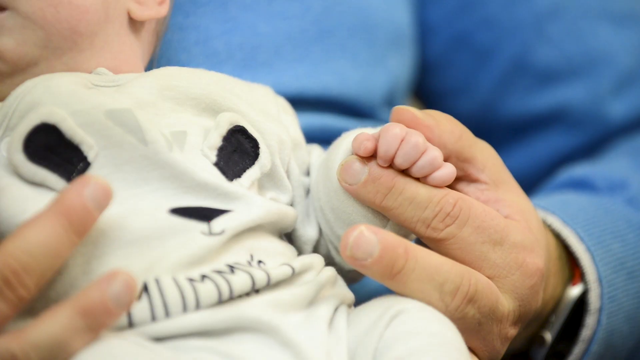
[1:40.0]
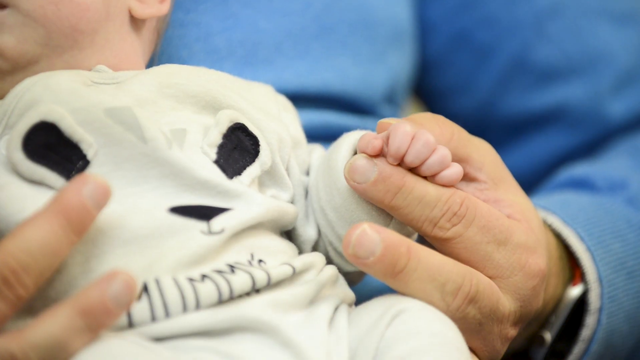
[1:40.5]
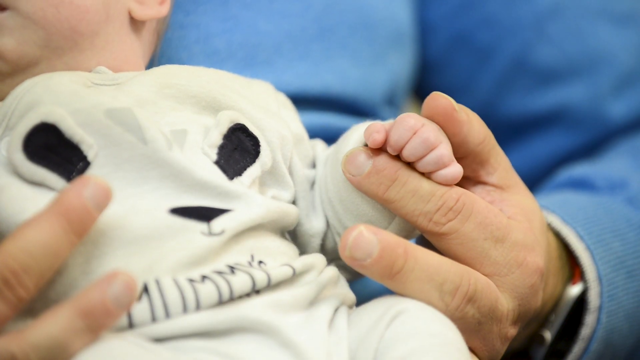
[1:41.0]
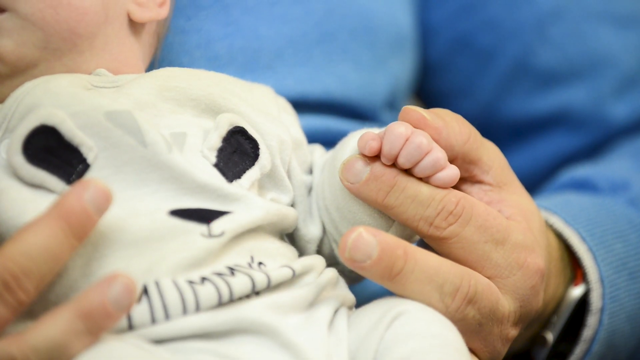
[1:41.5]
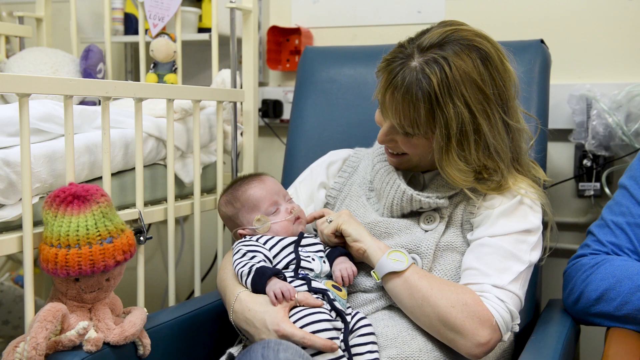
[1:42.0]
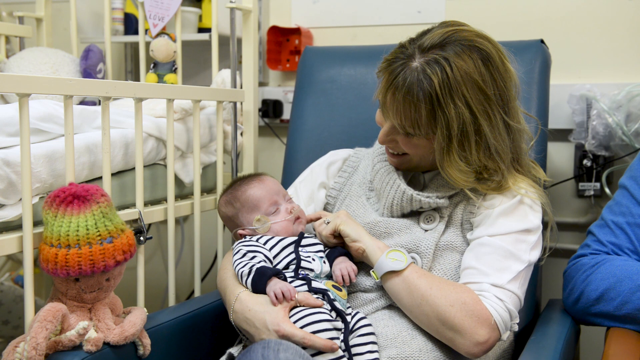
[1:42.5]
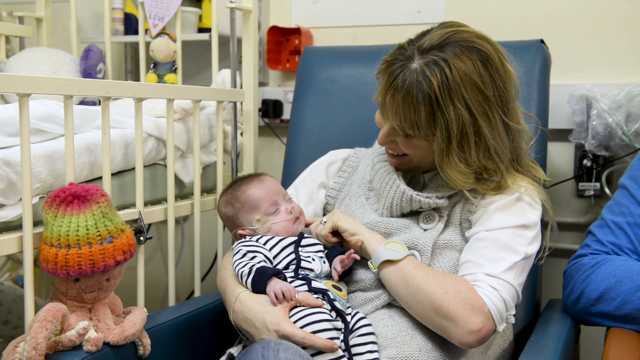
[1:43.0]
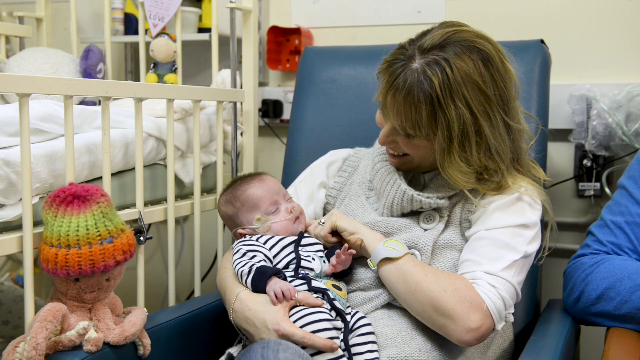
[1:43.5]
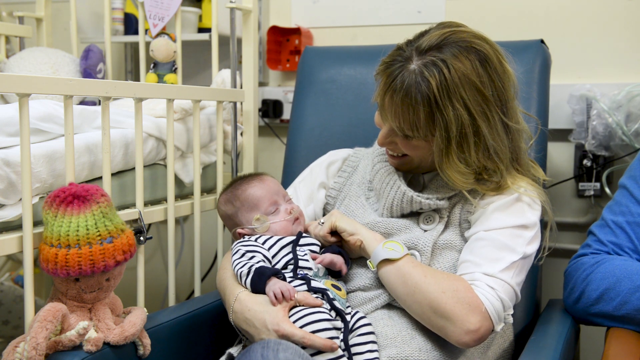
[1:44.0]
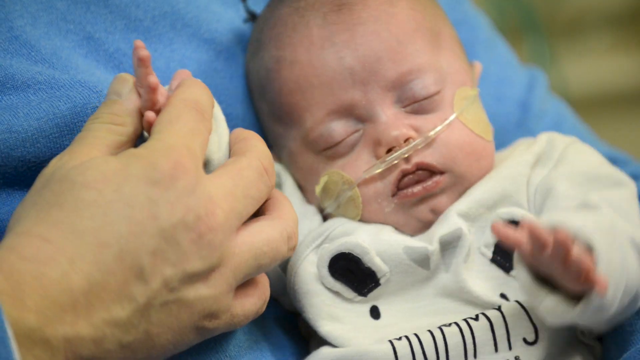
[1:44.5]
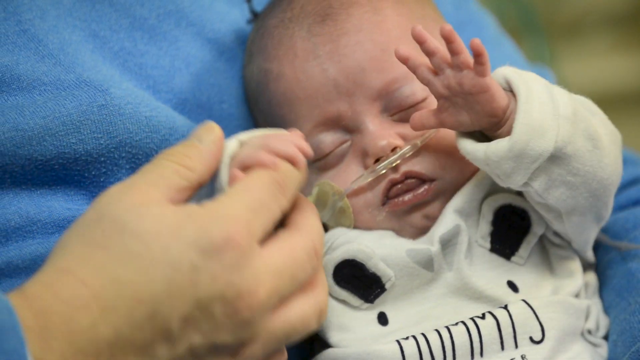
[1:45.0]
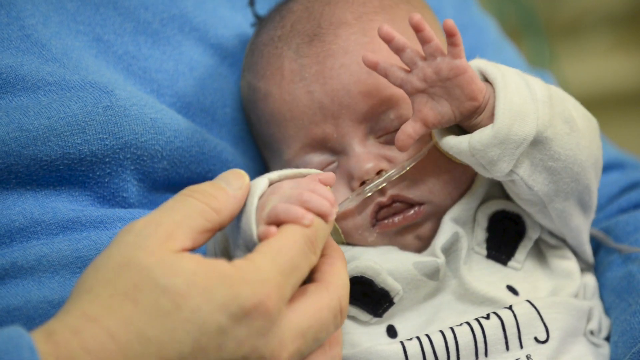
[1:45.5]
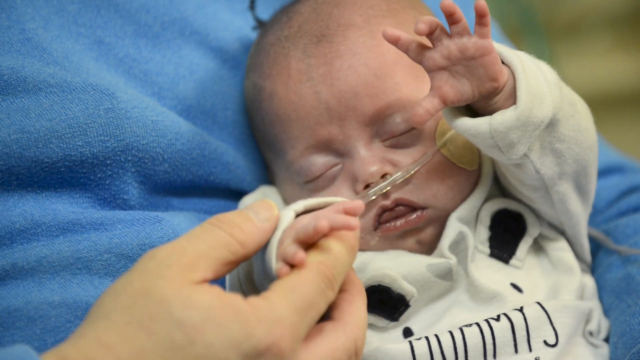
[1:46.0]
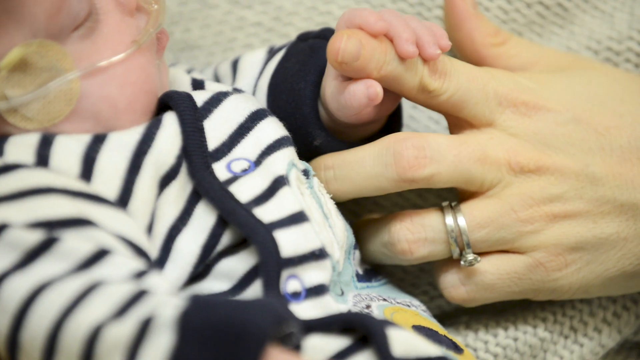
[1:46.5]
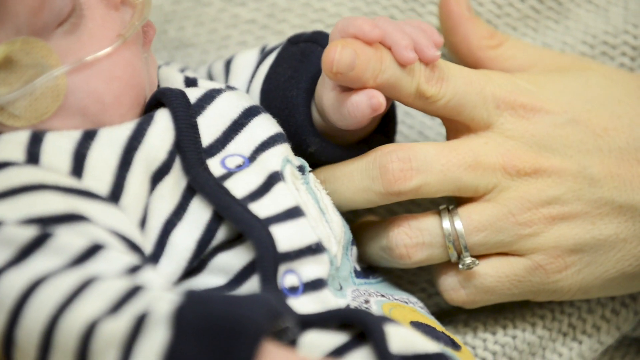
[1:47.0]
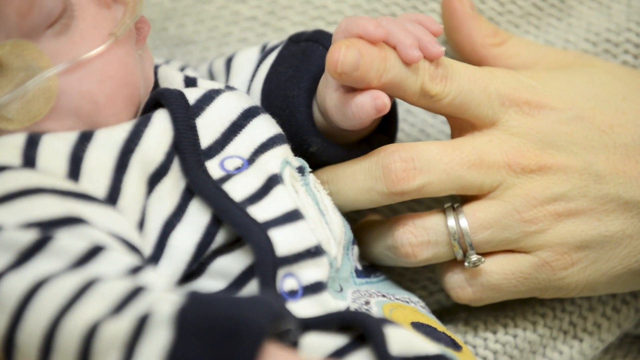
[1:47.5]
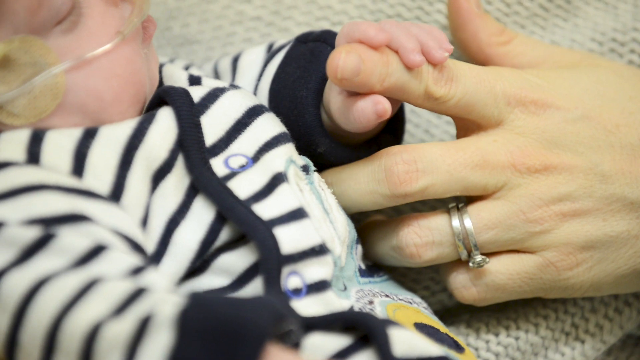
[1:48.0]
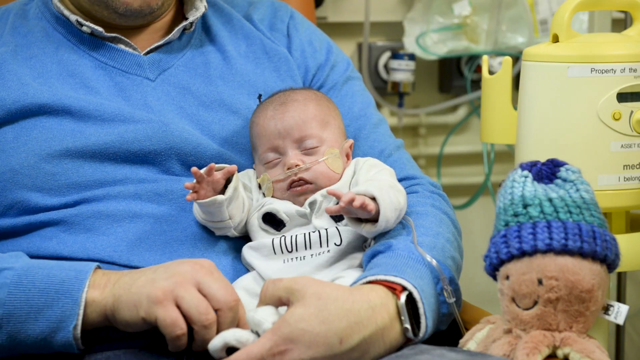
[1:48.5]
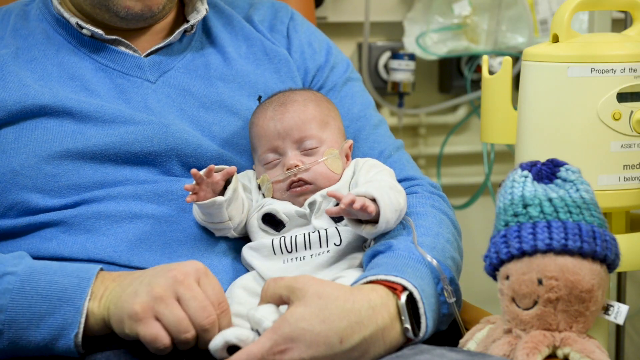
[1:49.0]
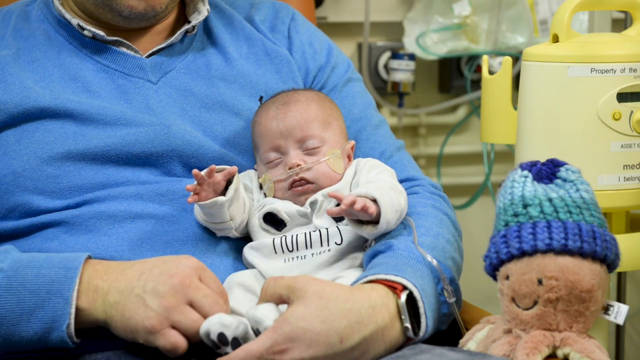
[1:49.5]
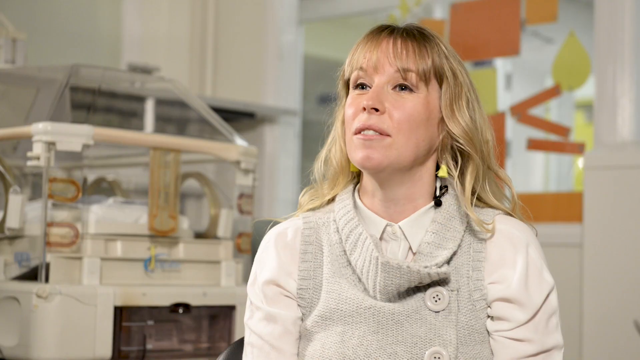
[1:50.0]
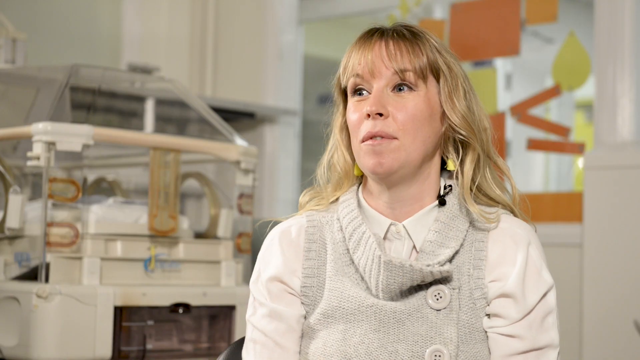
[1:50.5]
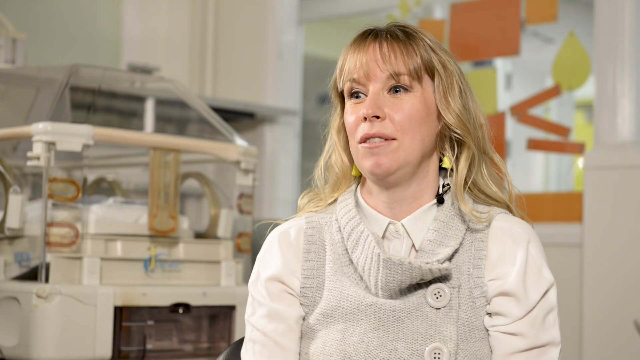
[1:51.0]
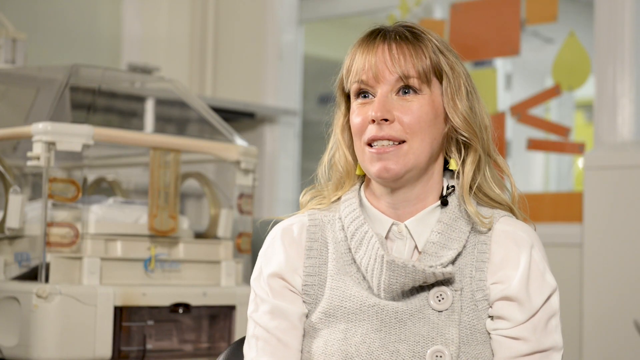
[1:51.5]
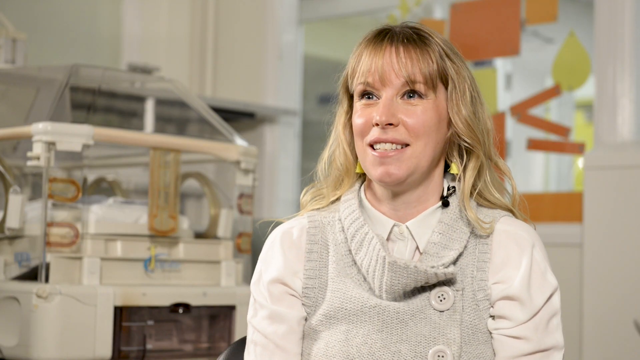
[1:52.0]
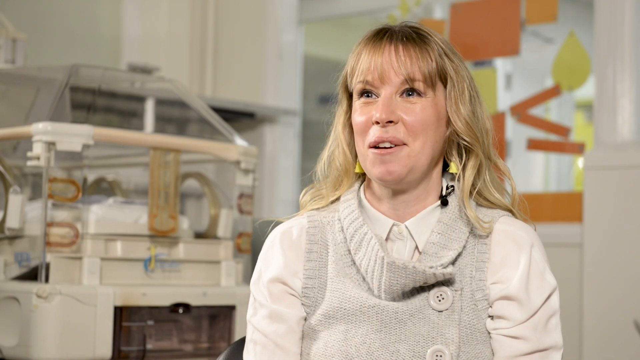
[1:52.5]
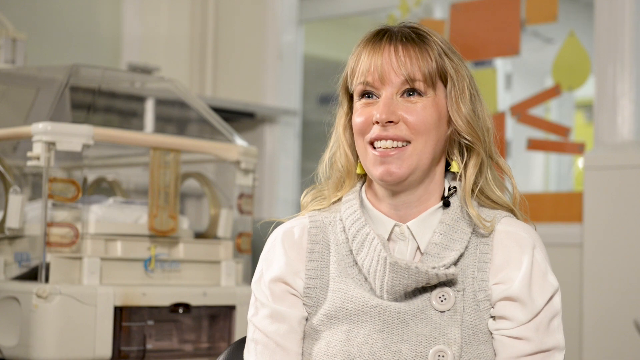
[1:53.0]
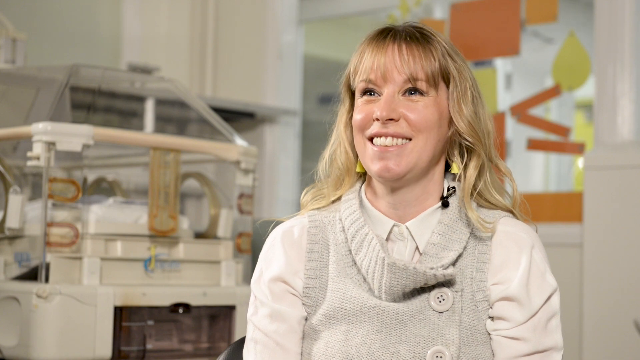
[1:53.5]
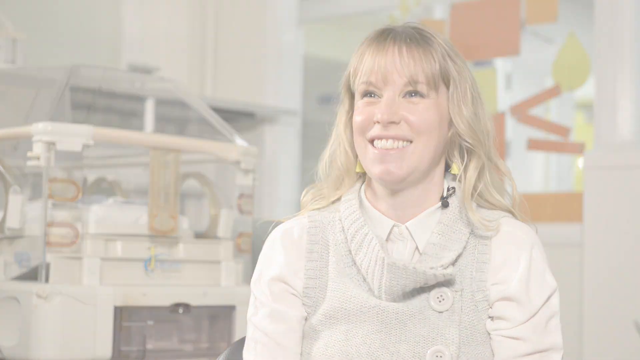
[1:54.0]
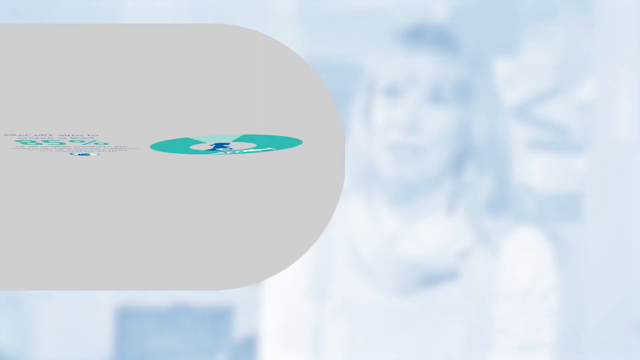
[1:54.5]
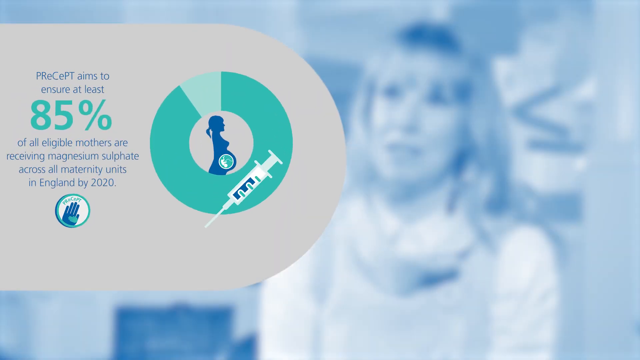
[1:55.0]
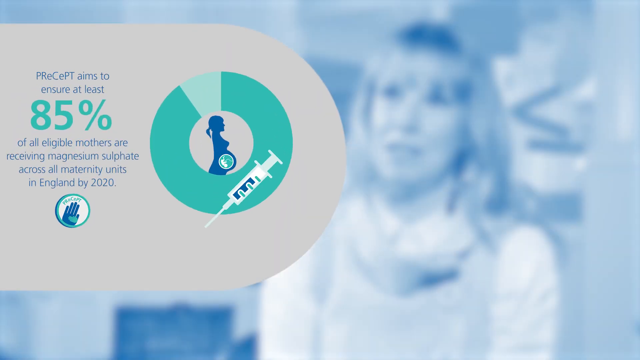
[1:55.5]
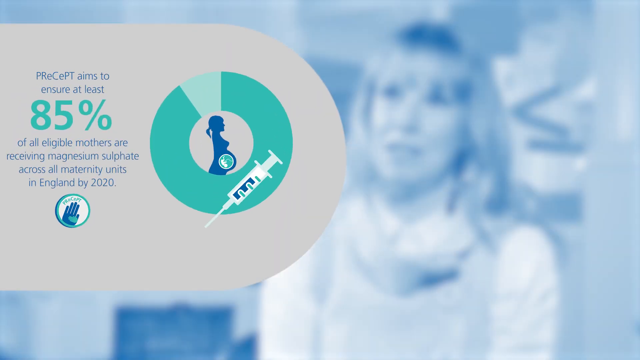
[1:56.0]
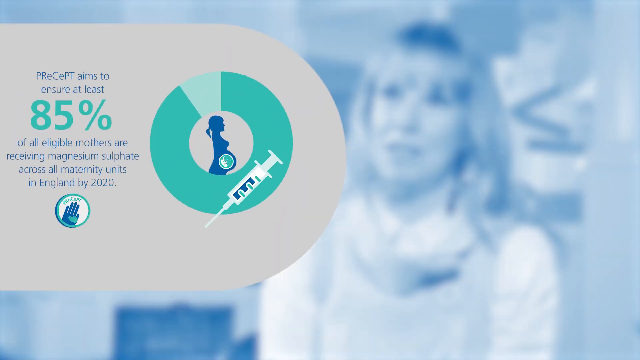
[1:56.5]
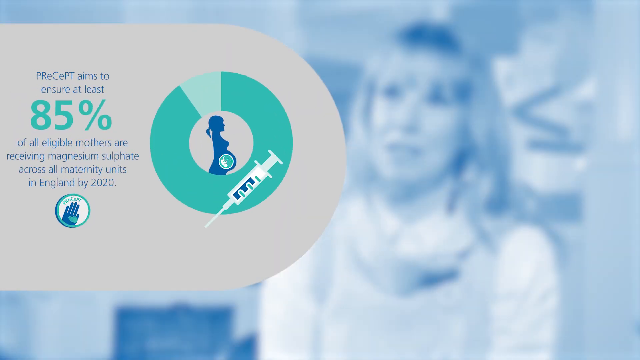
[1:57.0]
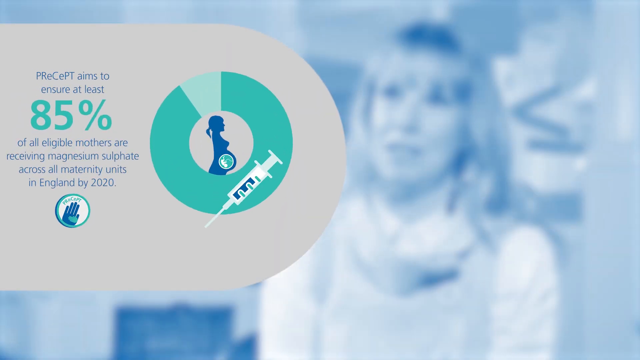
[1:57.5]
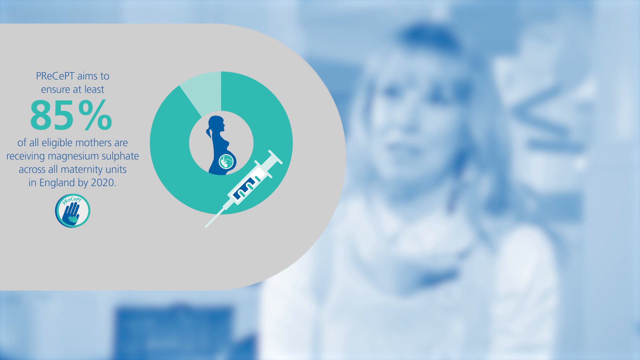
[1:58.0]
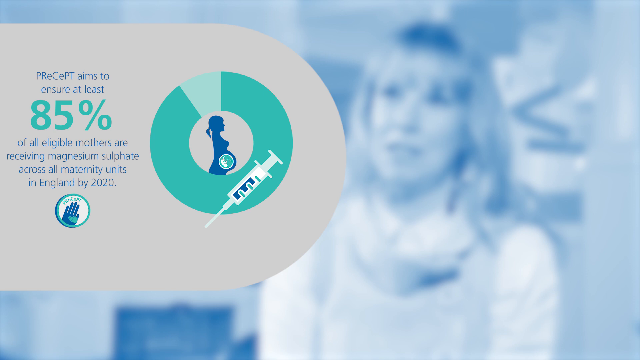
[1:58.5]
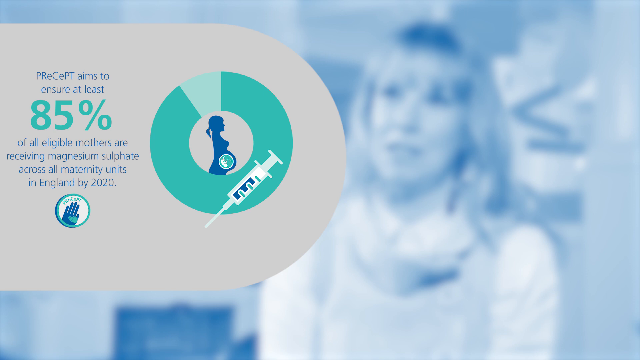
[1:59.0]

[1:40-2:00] A quite zoomed-in shot shows the dad holding the baby's hand; only his hand, the baby's hand and part of the baby's onesie are visible. The shot moves to the mum in a blue chair, holding her baby in her right hand while her left hand strokes the baby's face. Both of the baby's hands move up and down, looking like they are stretching. The baby clutches the mother's finger, its hand smaller than her finger, showing how tiny the babies are. The video returns to the mother speaking to the camera before an infographic reads "PRE-CEPT aims to ensure at least 85% of all eligible mothers are receiving magnesium sulphate across all maternity units in England by 2020", with "85%" in turquoise. To the right is a round graph with a blue pregnant woman inside it and a needle at the bottom right of the circle.